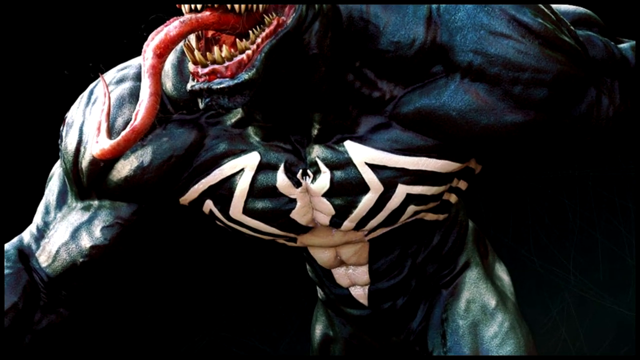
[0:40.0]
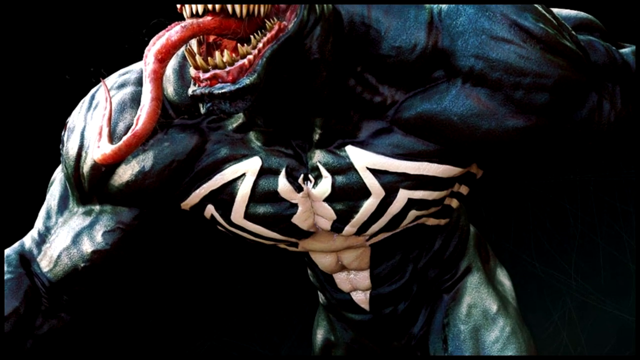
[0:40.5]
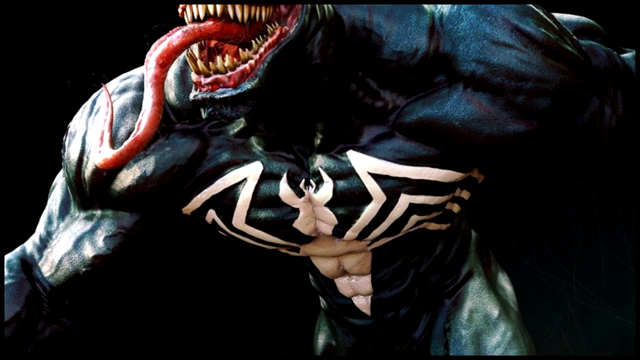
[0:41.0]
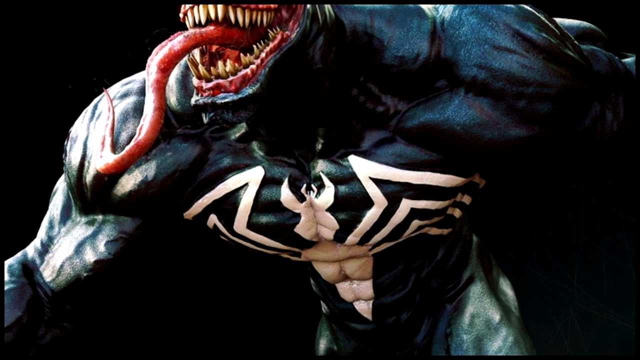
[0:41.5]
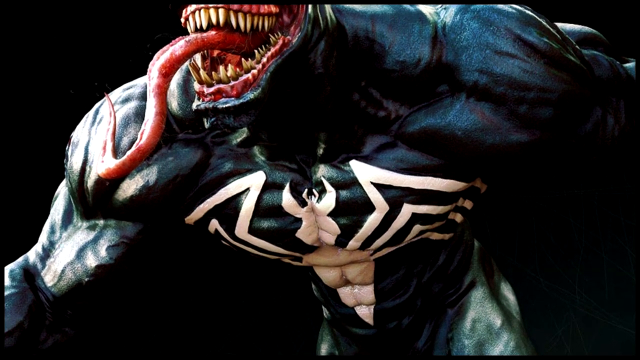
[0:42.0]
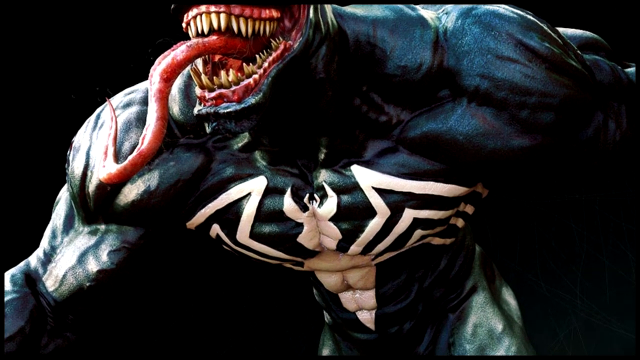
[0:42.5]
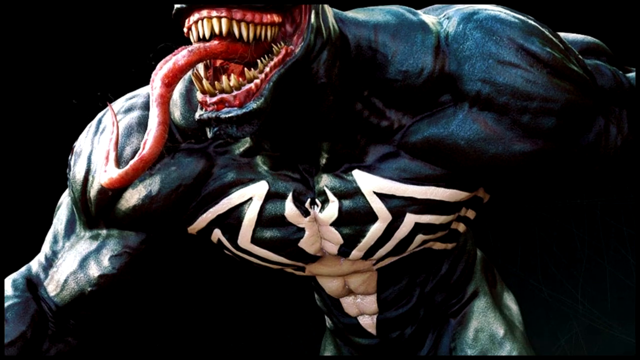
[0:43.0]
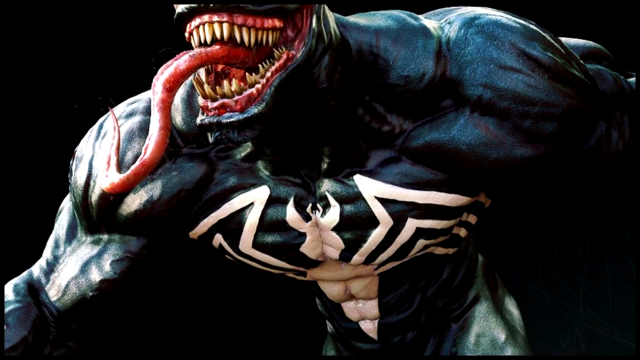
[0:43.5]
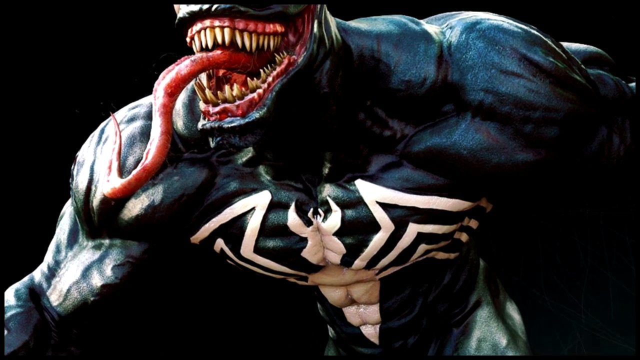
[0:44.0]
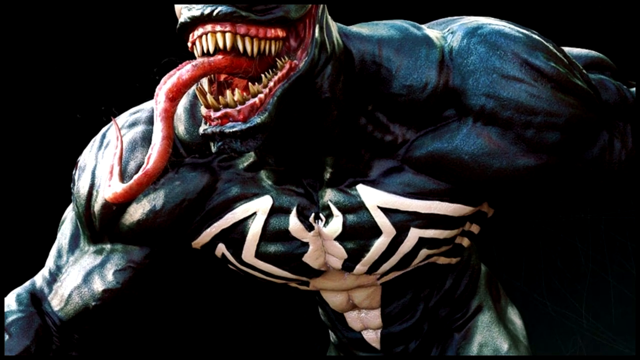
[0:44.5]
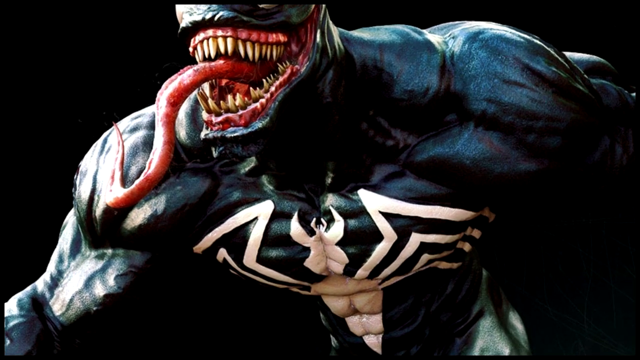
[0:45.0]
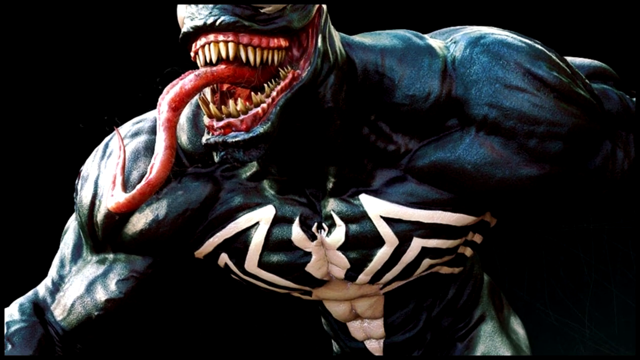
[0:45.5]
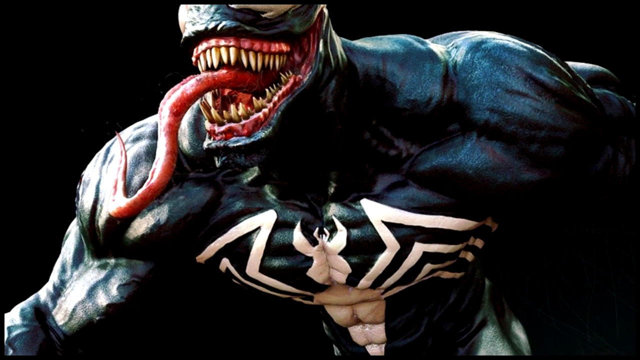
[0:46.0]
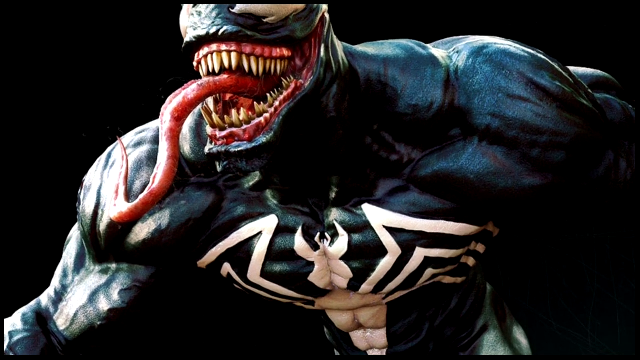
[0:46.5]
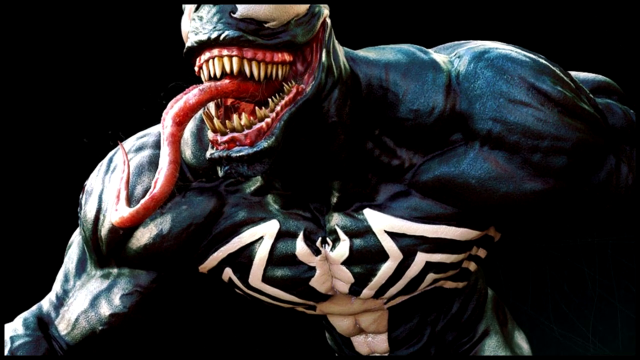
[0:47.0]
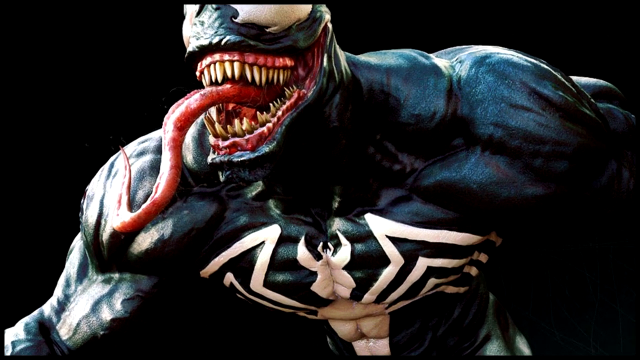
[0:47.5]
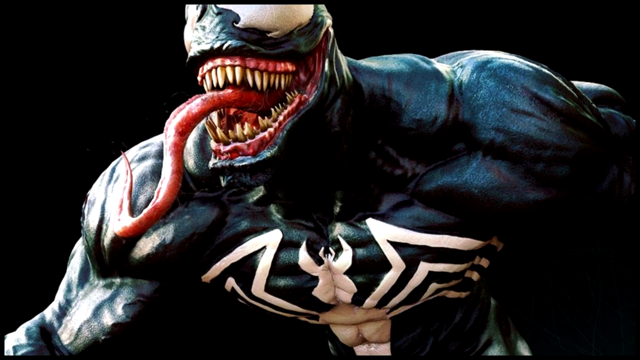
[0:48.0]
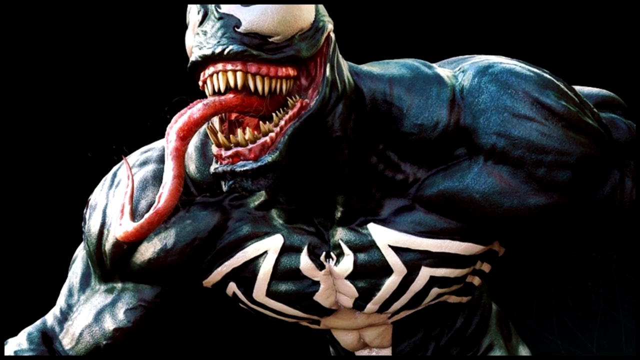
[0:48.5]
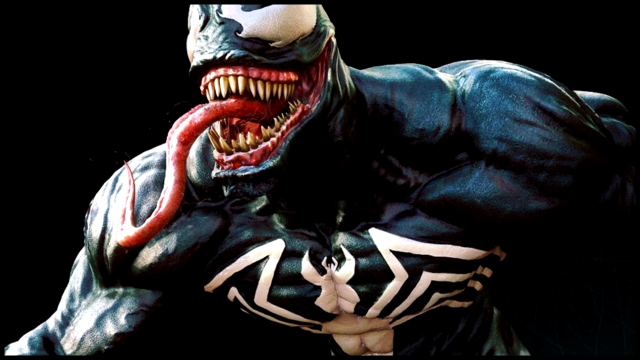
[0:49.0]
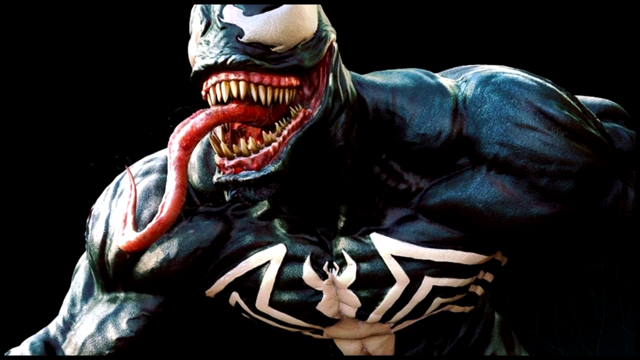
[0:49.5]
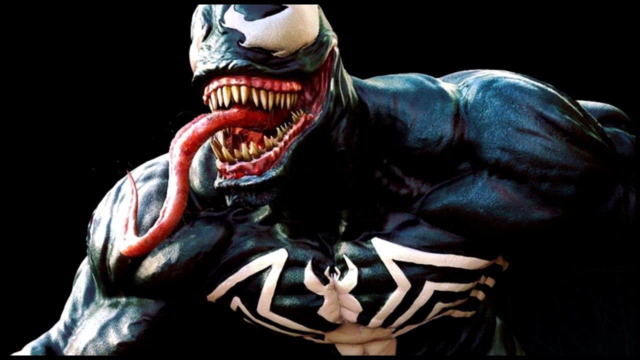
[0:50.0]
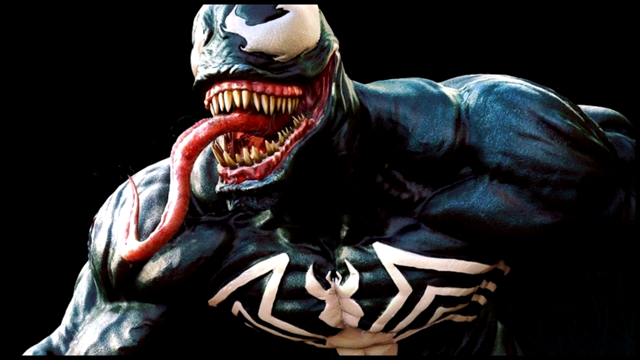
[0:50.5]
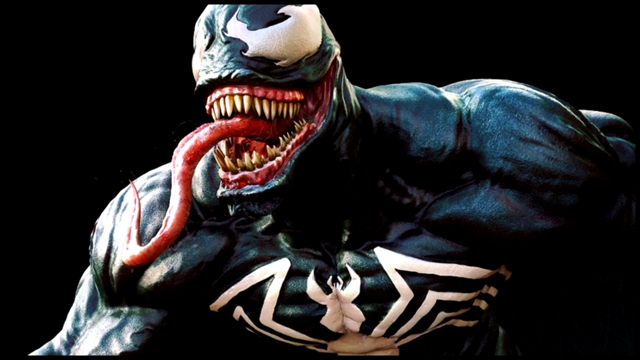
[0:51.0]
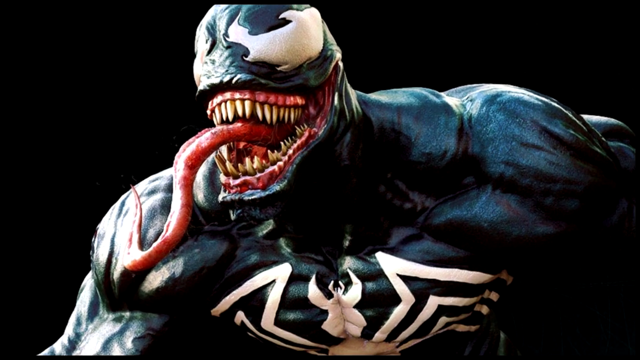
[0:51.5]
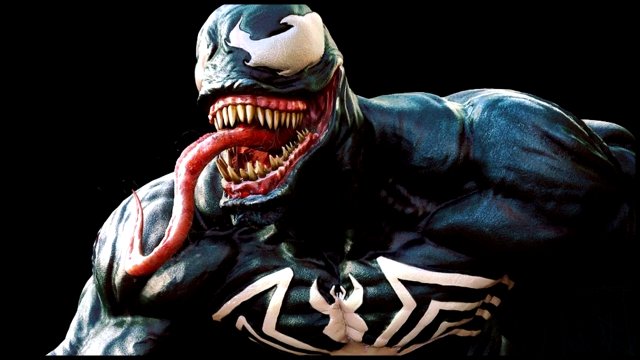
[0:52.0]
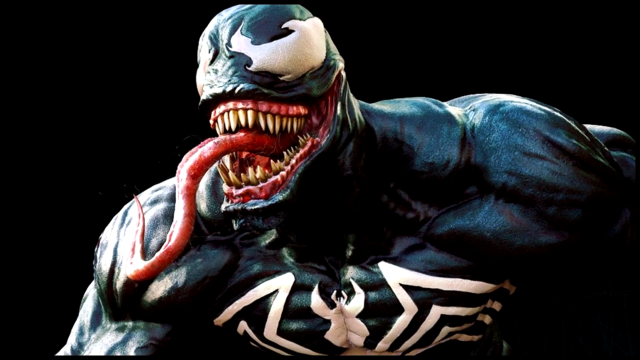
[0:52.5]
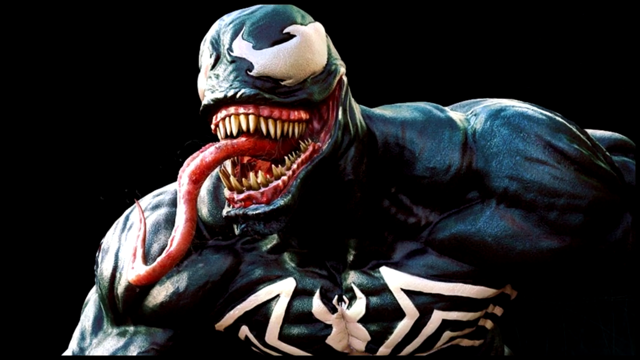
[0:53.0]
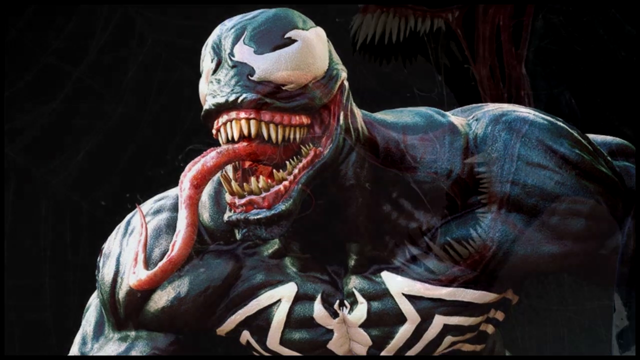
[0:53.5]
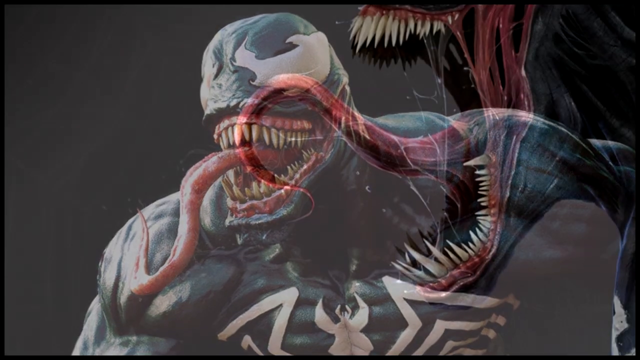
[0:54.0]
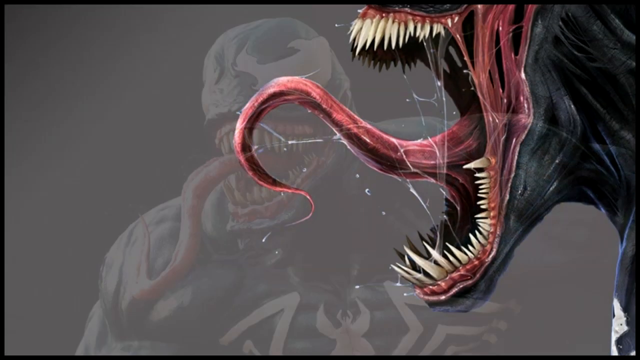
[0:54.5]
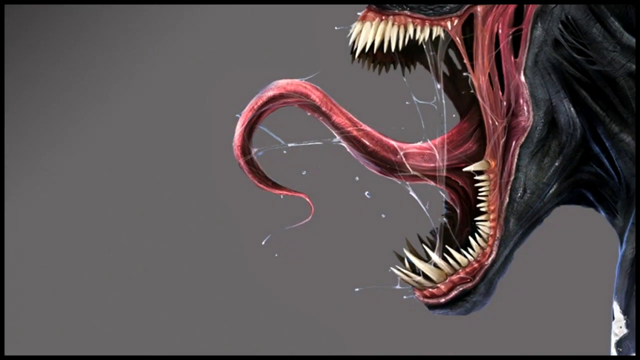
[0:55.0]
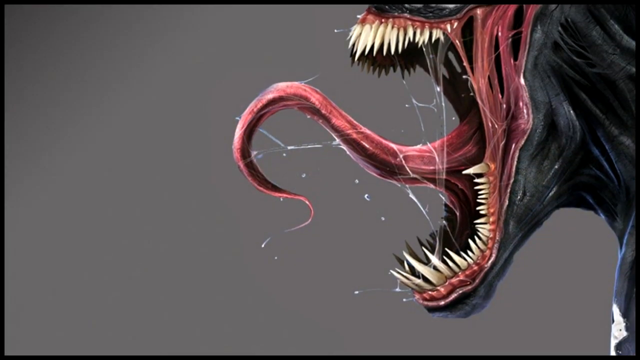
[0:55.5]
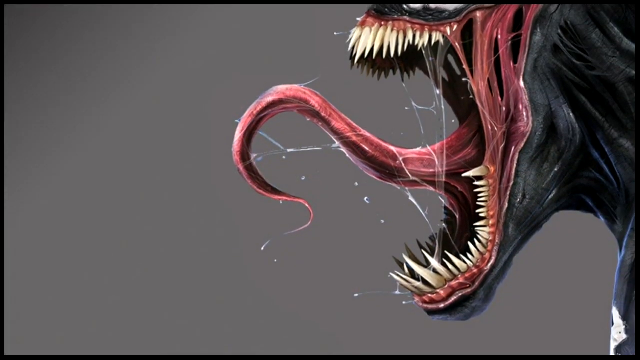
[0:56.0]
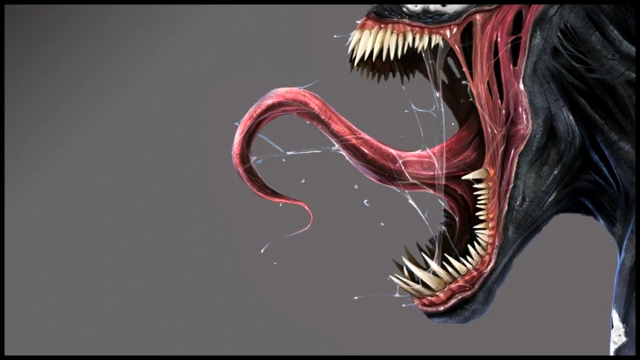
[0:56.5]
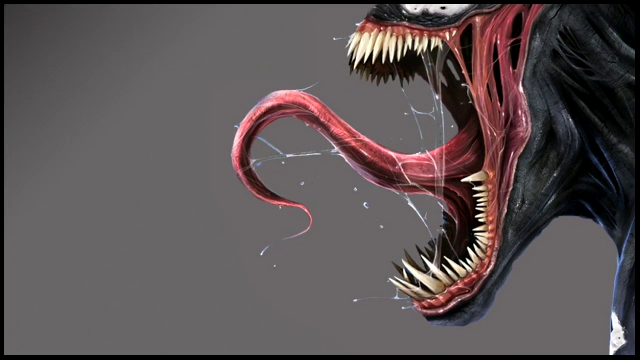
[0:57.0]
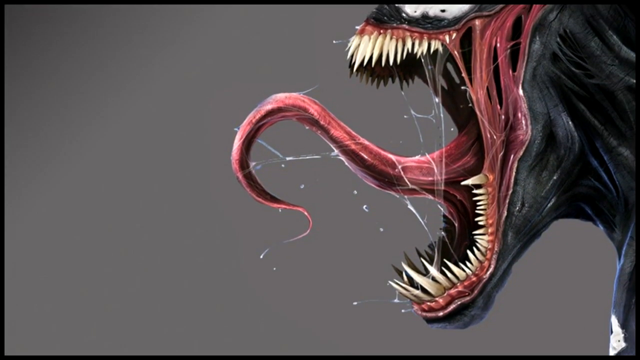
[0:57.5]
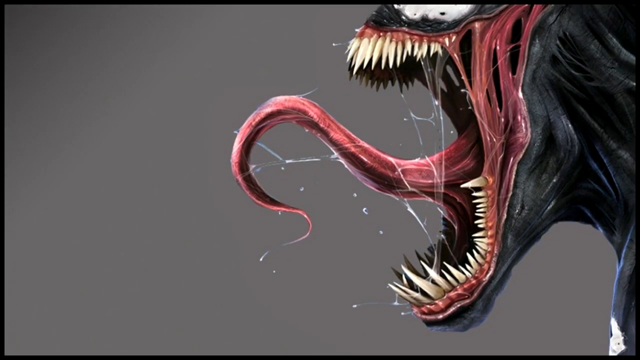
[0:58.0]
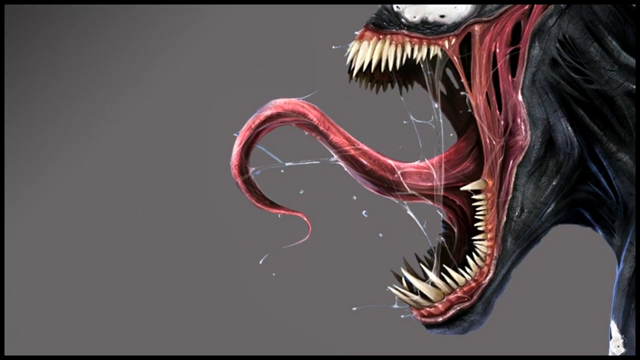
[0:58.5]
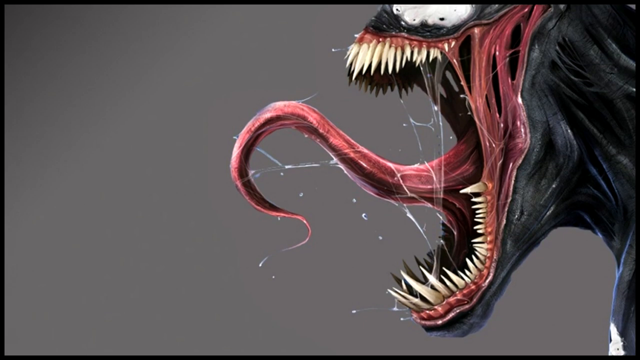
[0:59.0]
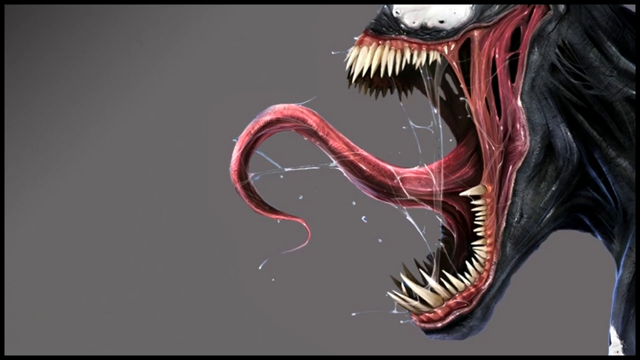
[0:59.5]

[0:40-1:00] The camera pans slowly from the lower abdomen of the Venom creature up toward the head. At first the entire torso is visible, along with the upper side of the legs, which look a little greenish and fade into black. The creature has a very definite six-pack, though the black areas are less visible. In the middle of the abdomen is a white triangle with a small point facing down, white all the way up to where the pecs start, and the stomach muscles show clearly in the white area. Where the pecs start, four legs emanate from the front or bottom end of this triangle, which is also pointy at the bottom, so it looks like a creature on the chest. A white patch in the middle of the chest looks like that creature's head with two horns. As the view scrolls up, the very muscular upper body appears, shown from the front but more from the creature's left side. The mouth is open, the tongue is slinking or hanging out, and the lips are pulled back to show red gums.